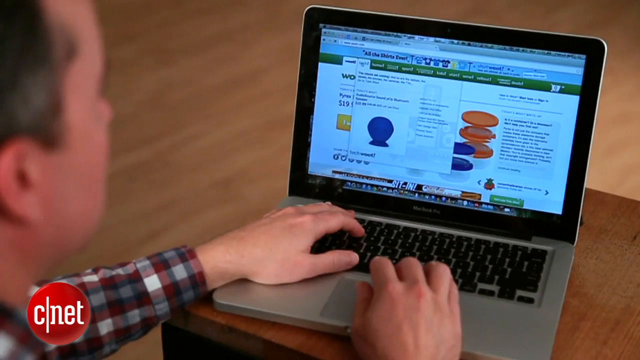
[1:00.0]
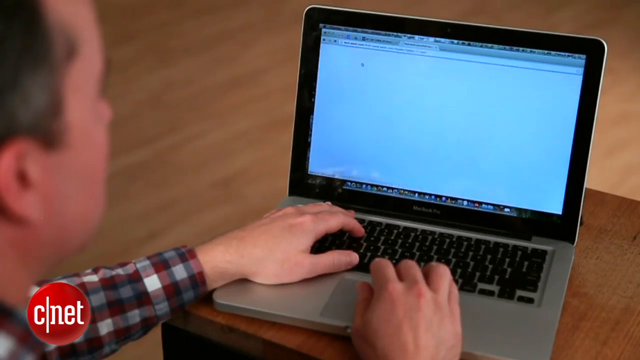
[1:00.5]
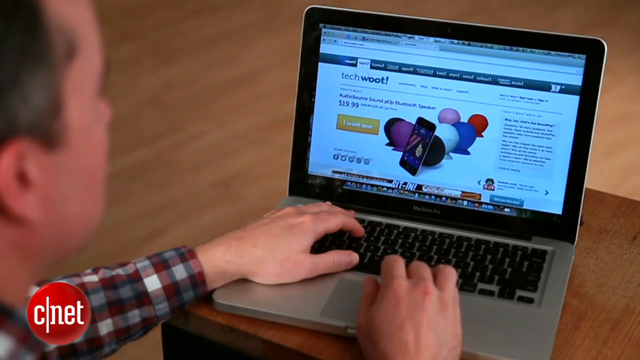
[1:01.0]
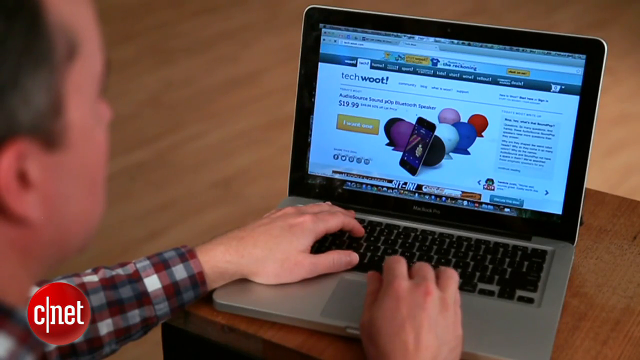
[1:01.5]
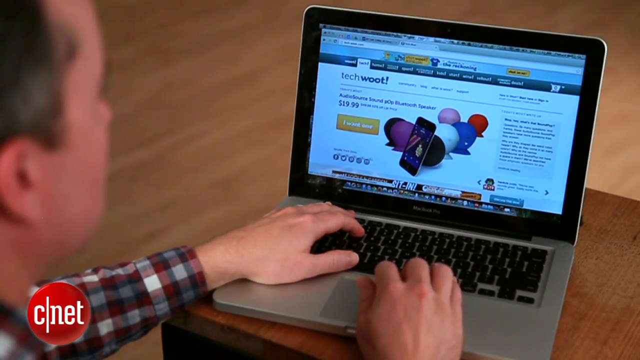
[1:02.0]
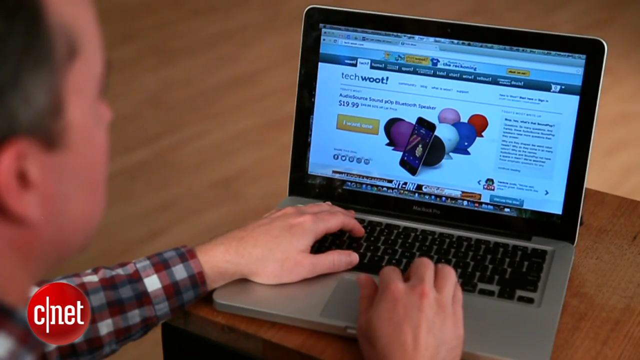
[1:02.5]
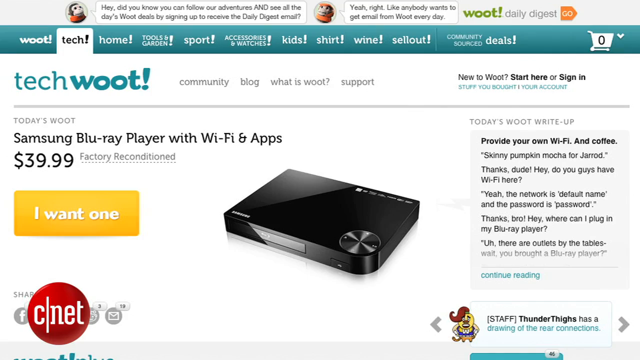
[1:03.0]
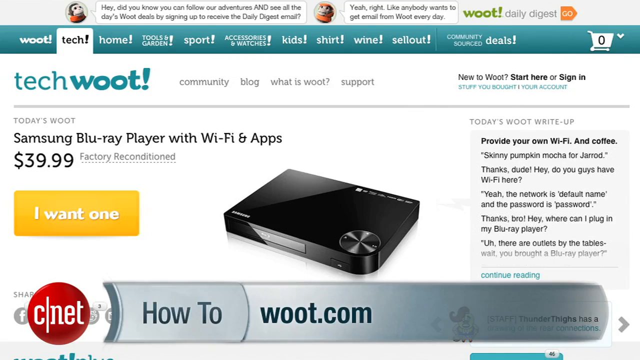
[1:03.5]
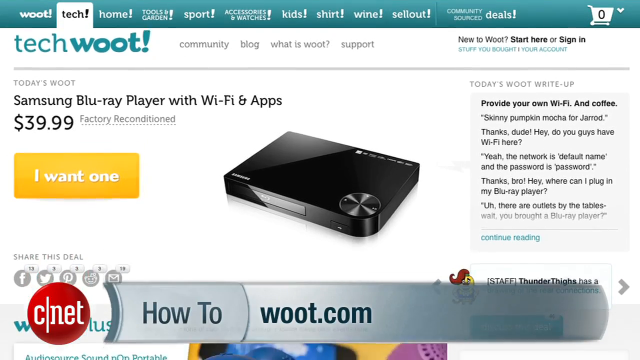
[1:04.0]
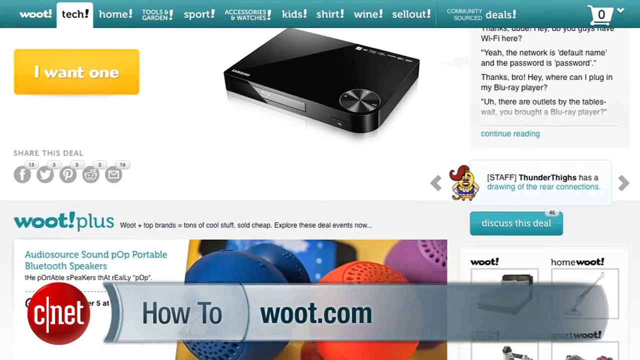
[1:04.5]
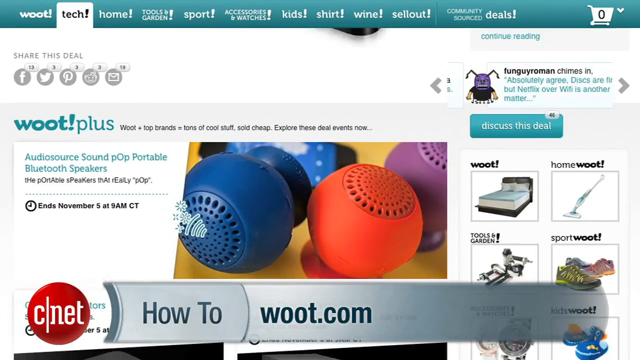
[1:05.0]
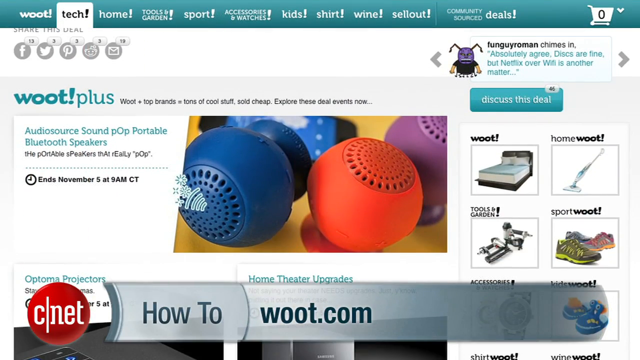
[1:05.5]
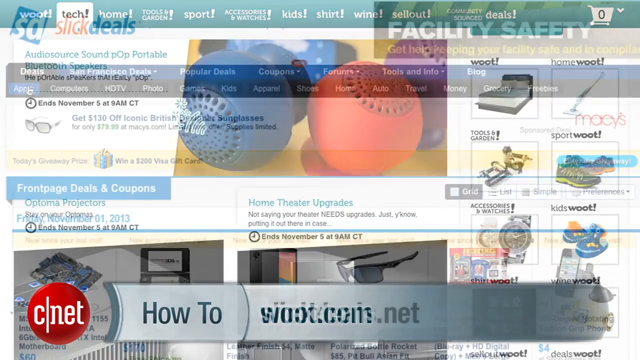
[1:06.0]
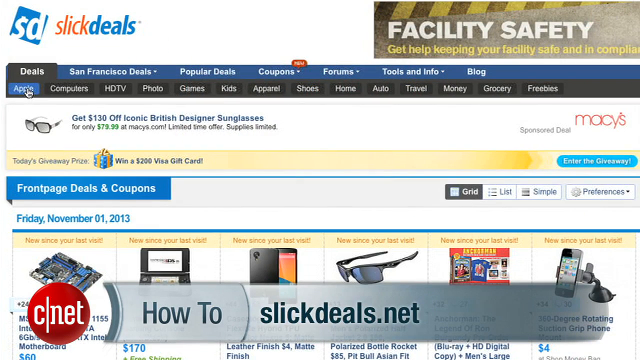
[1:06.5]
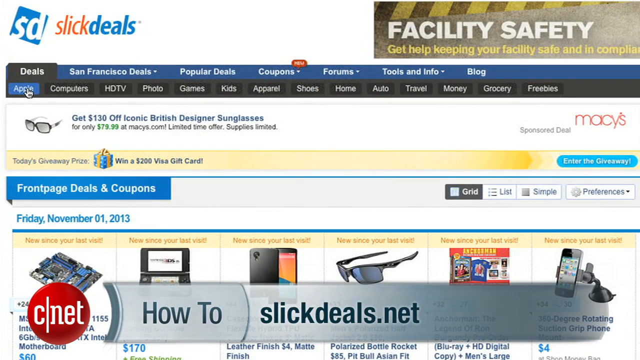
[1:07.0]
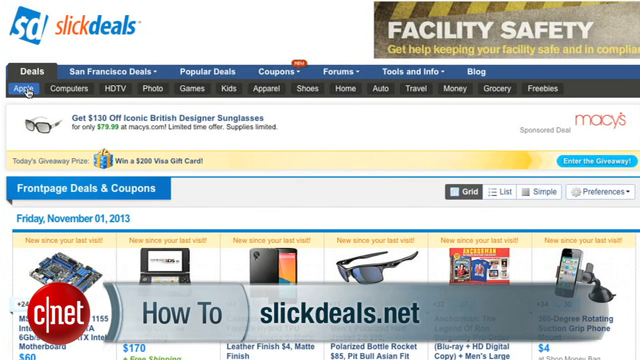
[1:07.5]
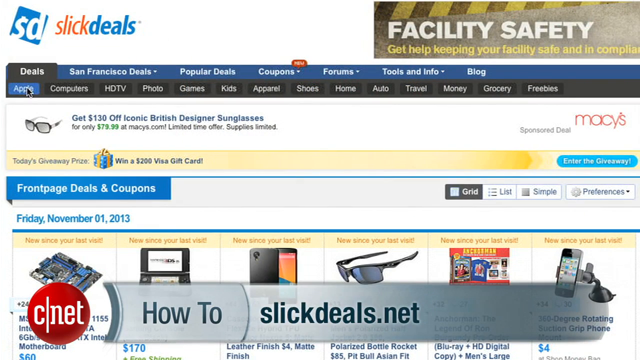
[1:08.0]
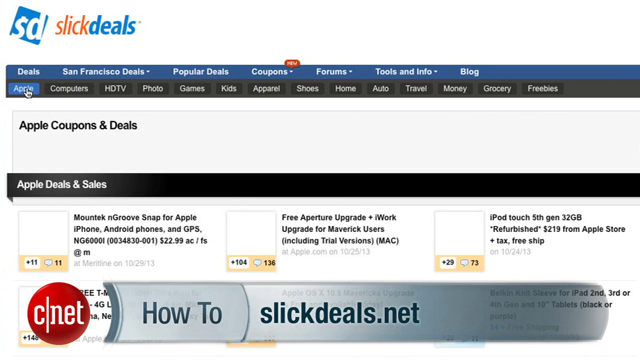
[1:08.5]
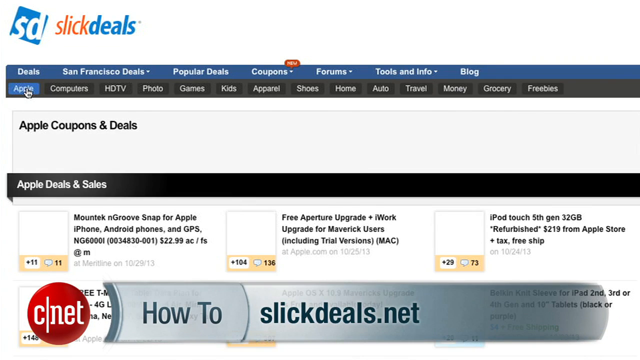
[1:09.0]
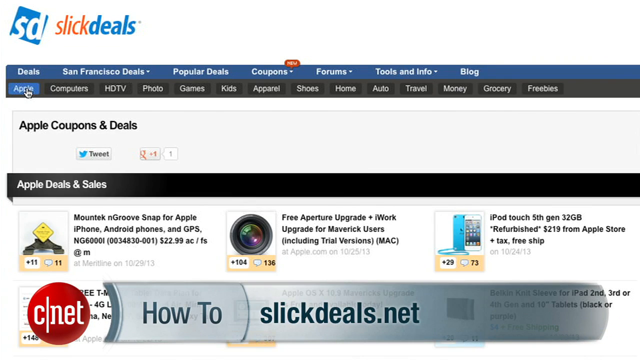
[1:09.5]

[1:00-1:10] The browsing on the MacBook continues, now looking at a Samsung Blu-ray player and then a site called Slick Deals. Chyrons read "howtowoot.com" and "howtoslickdeals.net" as the person navigates to those sites on the laptop and looks at price information; Woot Plus and Slick Deals are the sites shown. The sites have various tabs, some based on location and others on products, along with images, photography, and sponsors; Macy's appears to be a sponsor on the Slick Deals website.